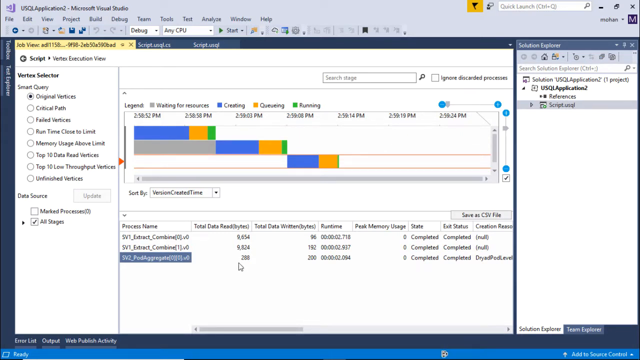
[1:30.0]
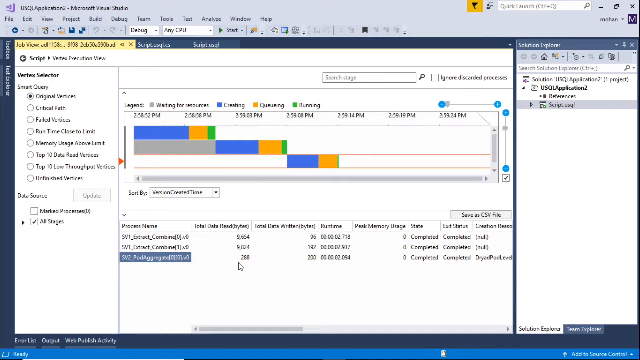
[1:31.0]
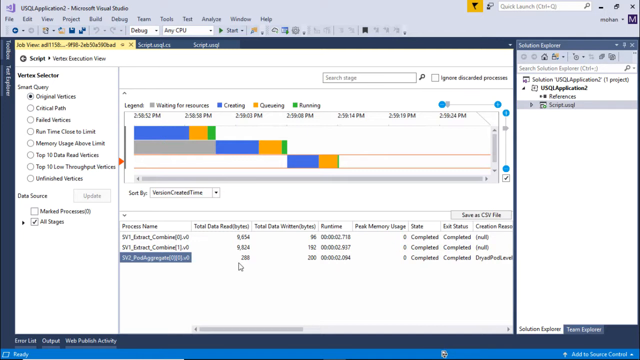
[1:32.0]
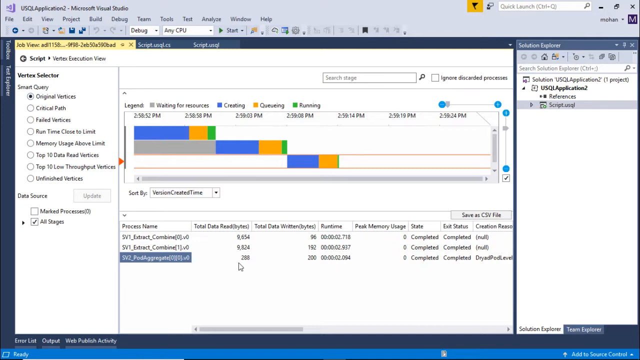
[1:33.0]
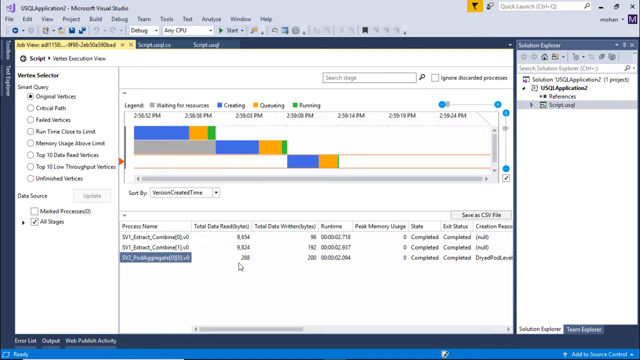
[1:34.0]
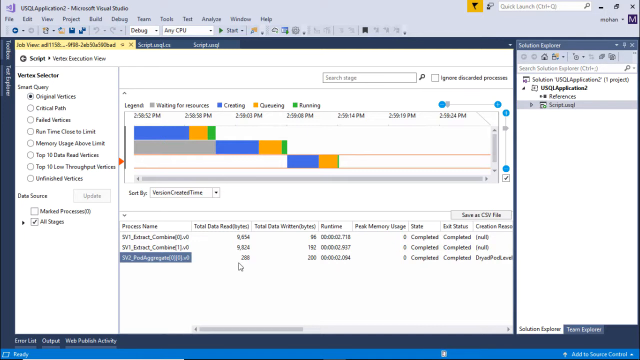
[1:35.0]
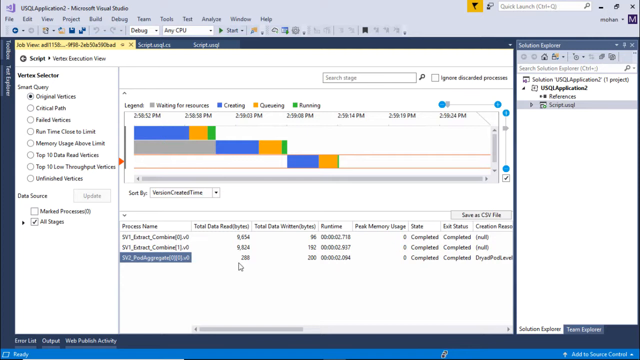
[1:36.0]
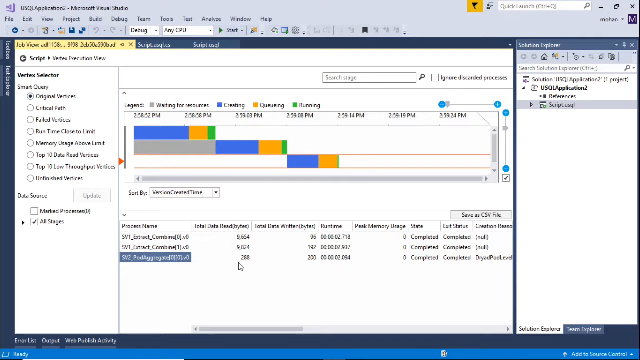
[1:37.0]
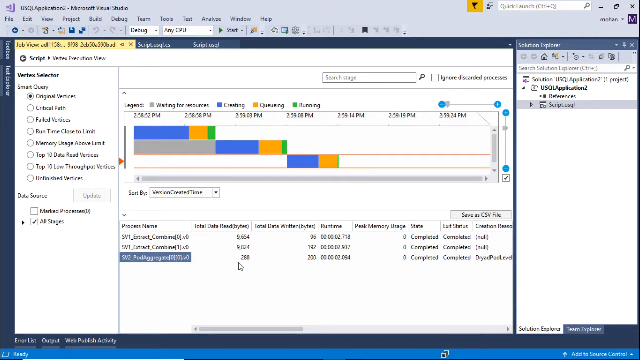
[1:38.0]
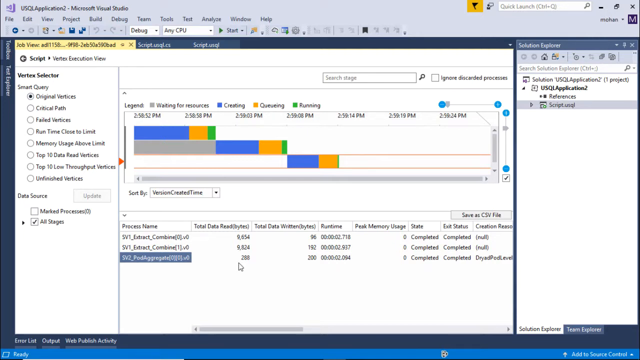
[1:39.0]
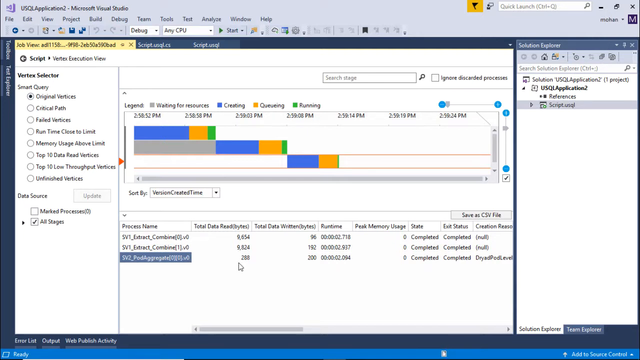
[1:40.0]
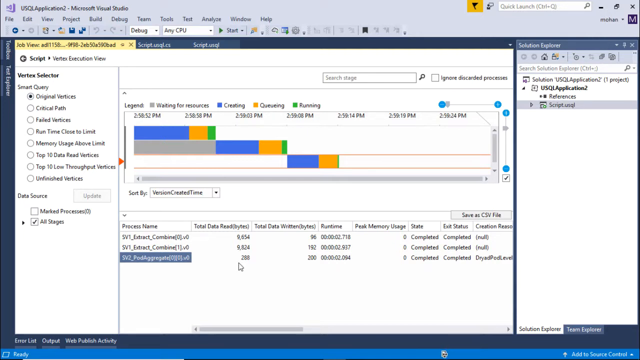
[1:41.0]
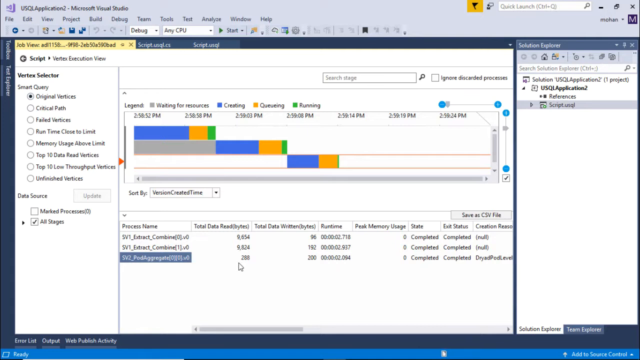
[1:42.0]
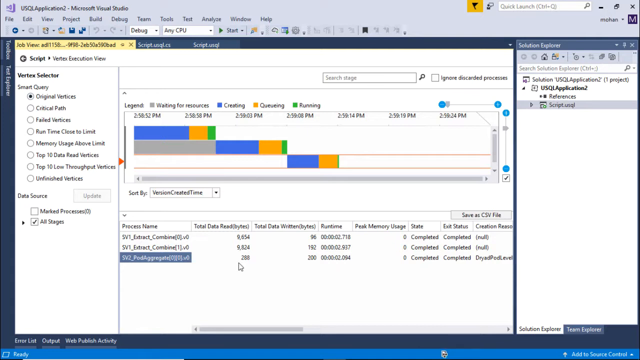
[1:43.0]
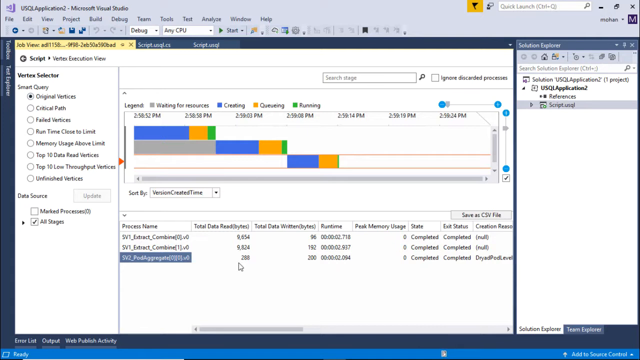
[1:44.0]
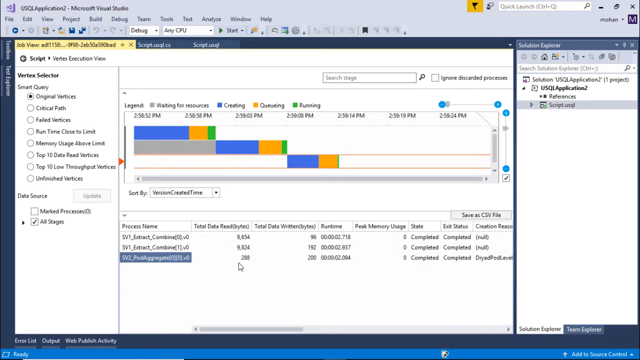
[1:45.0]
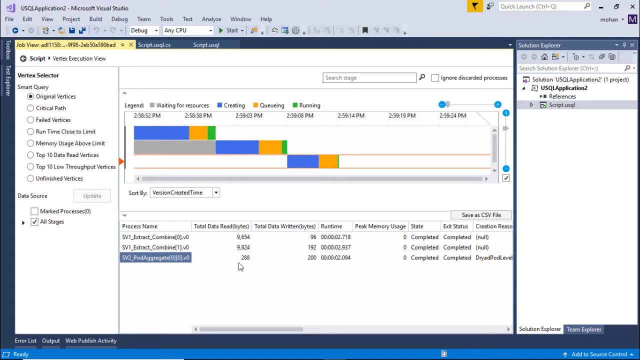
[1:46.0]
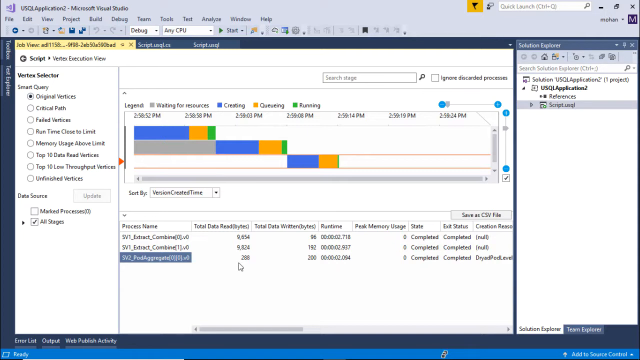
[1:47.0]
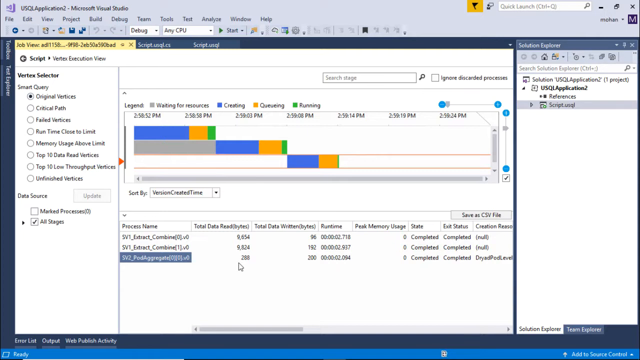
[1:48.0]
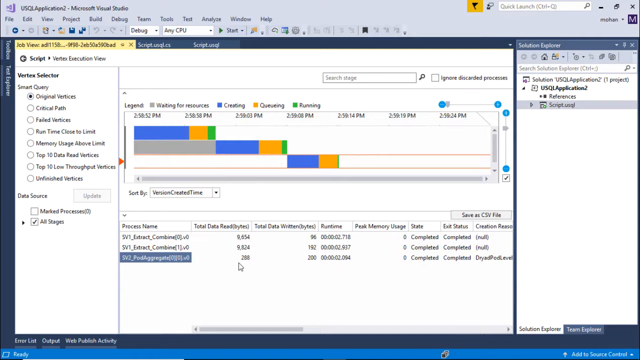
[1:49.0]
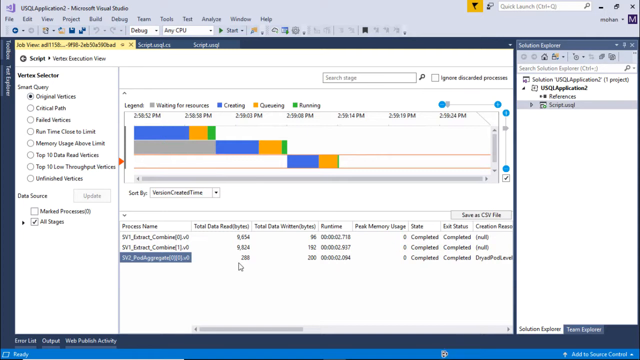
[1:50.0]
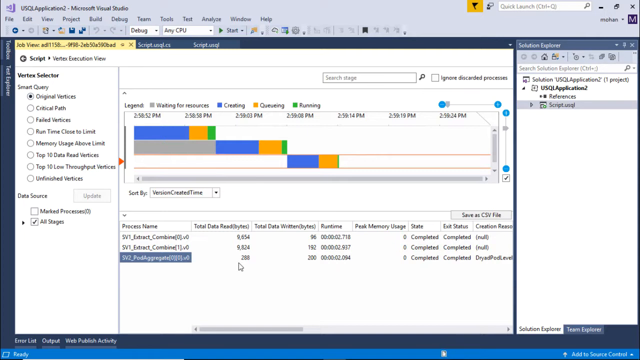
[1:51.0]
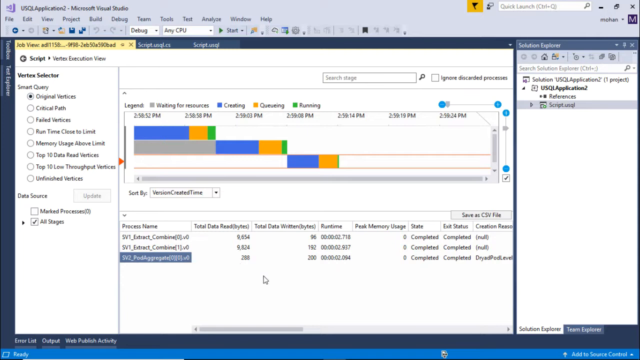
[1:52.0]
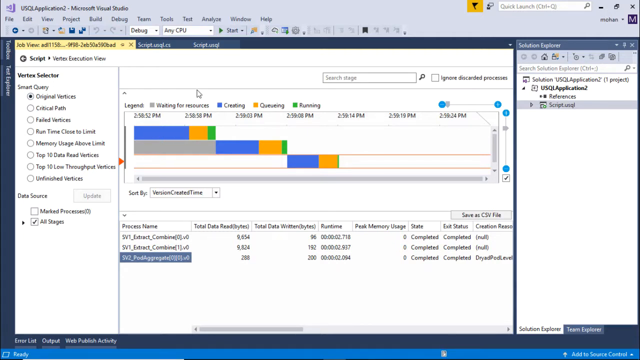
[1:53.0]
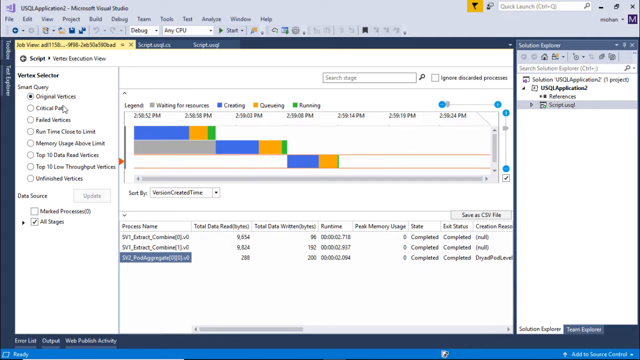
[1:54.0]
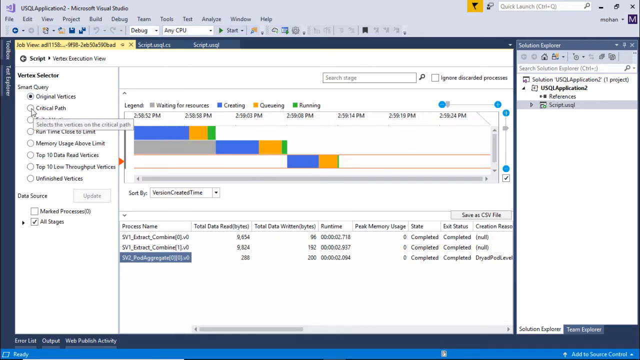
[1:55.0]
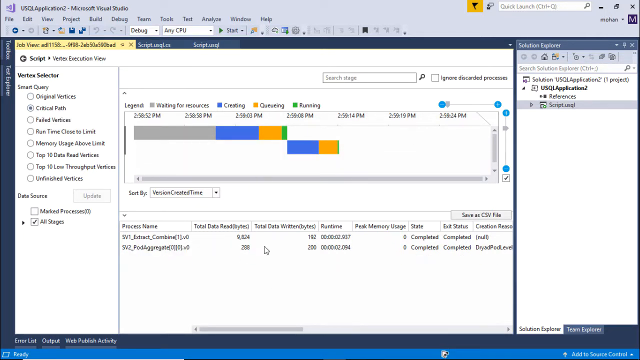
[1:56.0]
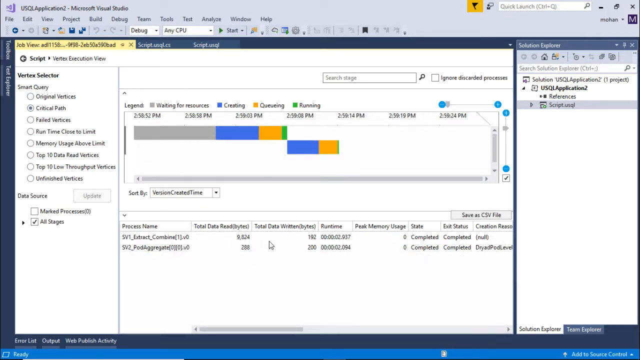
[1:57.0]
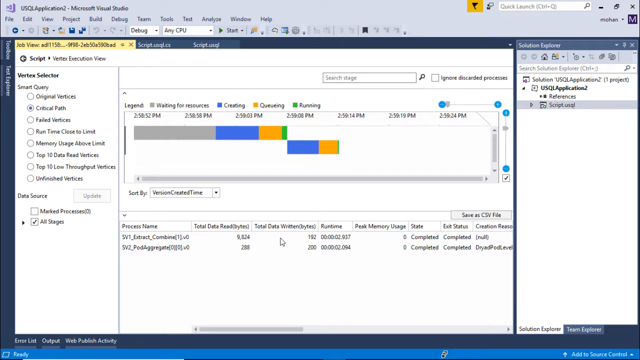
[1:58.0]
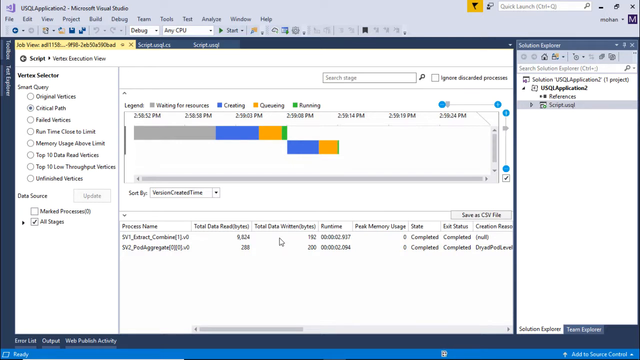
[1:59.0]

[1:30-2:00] A screen-sharing projection shows a computer screen in what appears to be a progress-chart type of program. The screen is divided into three main areas: a vertical rectangle on one side with bubbles and indecipherable text for the possible selections; the center, devoted to a graph using blue, gold and green to highlight various aspects of what is being charted, with indecipherable text below the chart relating directly to it; and another vertical rectangle off to the right with indecipherable text. All of this is below a row of file, edit and view selectors. At first the mouse remains still; when it begins to move, it goes over to the left-hand side of the screen to make a different bubble selection, changing what is on the screen.